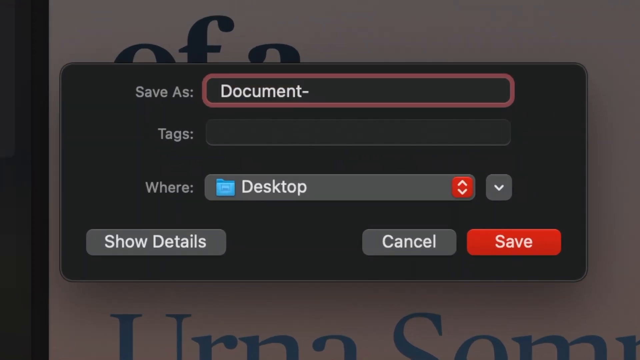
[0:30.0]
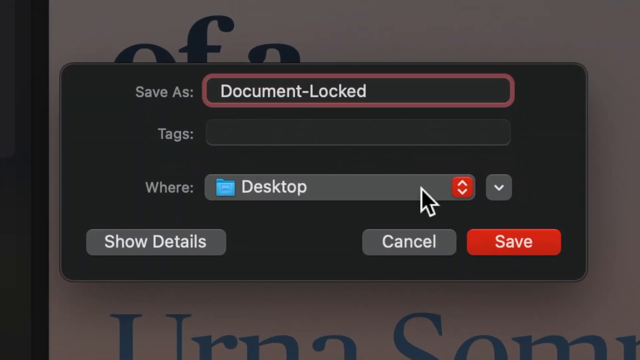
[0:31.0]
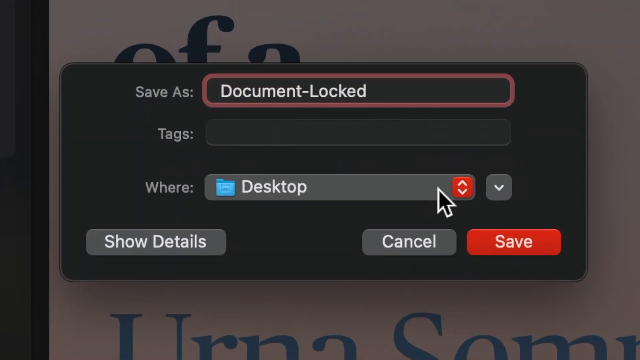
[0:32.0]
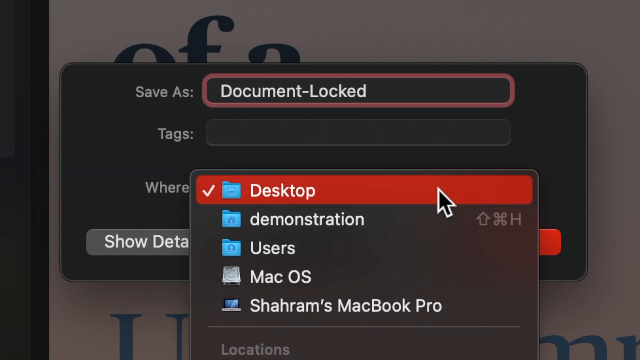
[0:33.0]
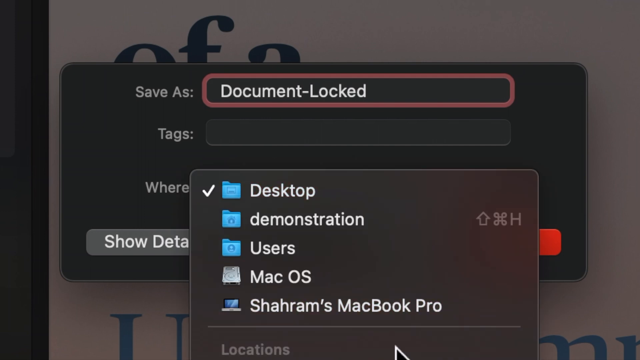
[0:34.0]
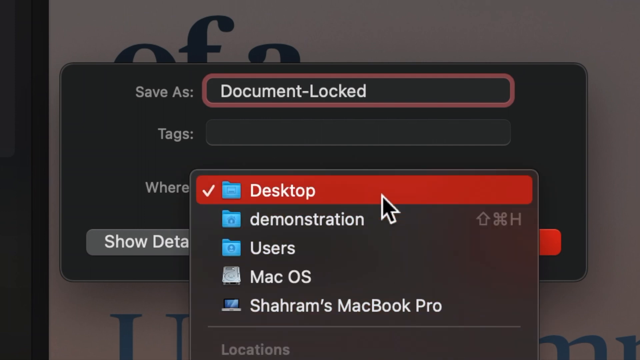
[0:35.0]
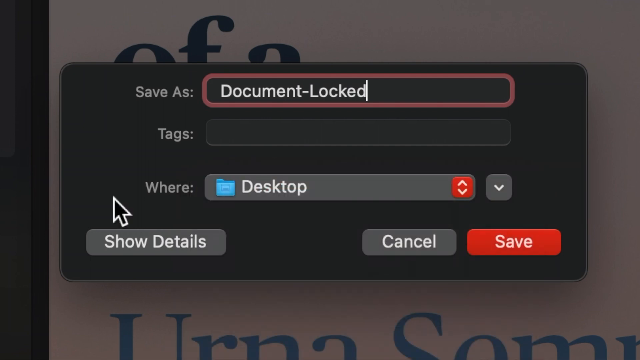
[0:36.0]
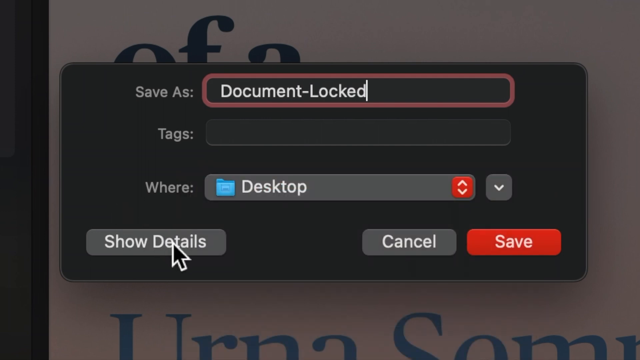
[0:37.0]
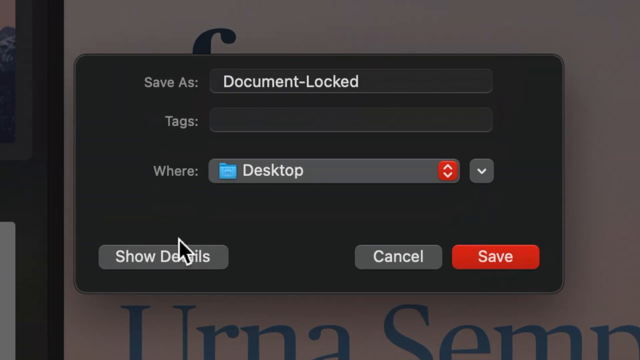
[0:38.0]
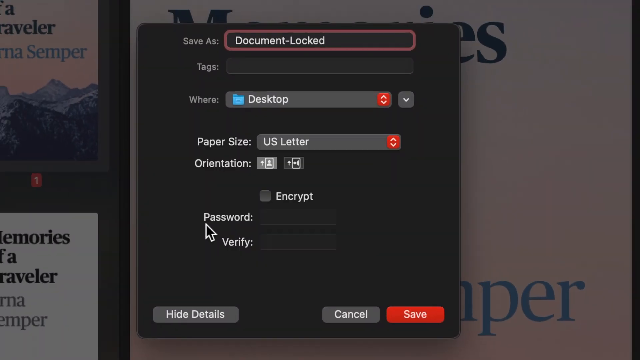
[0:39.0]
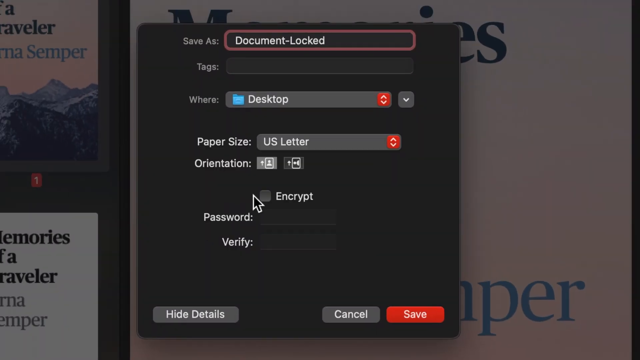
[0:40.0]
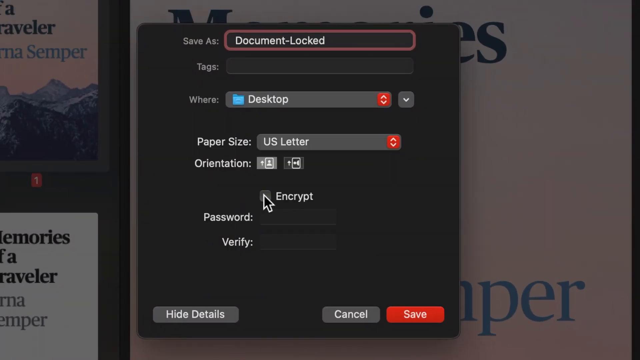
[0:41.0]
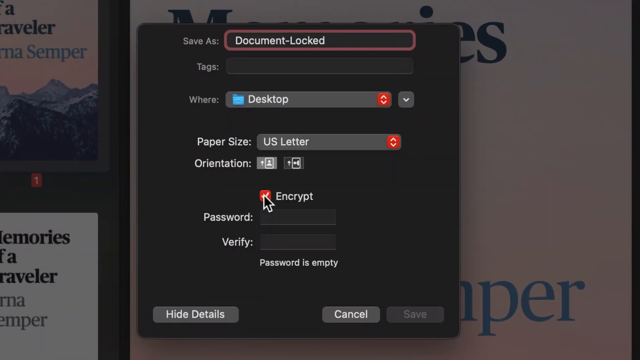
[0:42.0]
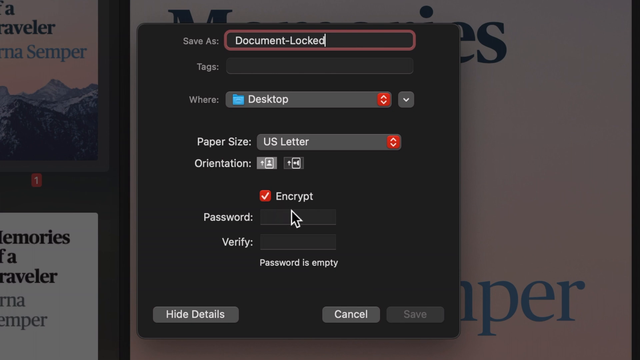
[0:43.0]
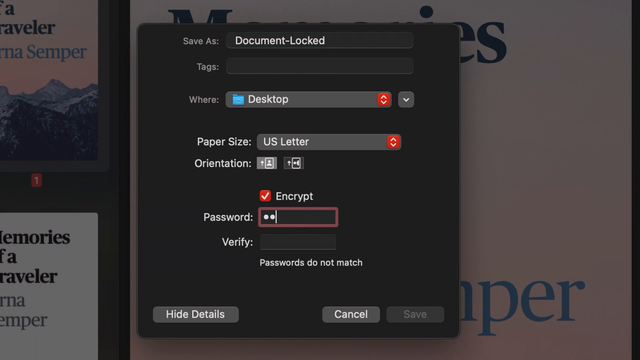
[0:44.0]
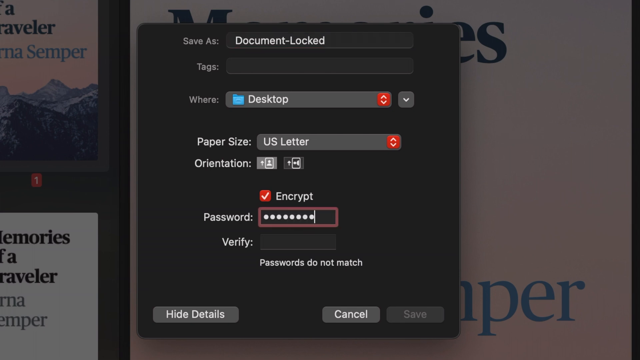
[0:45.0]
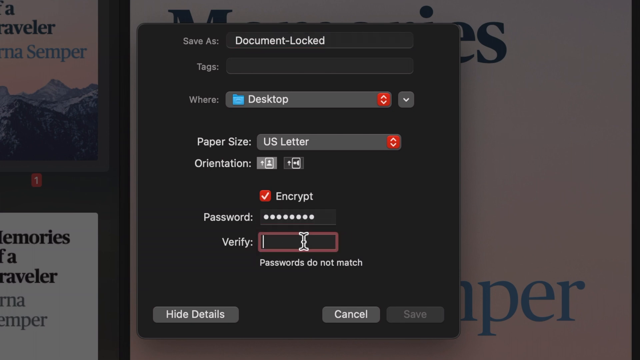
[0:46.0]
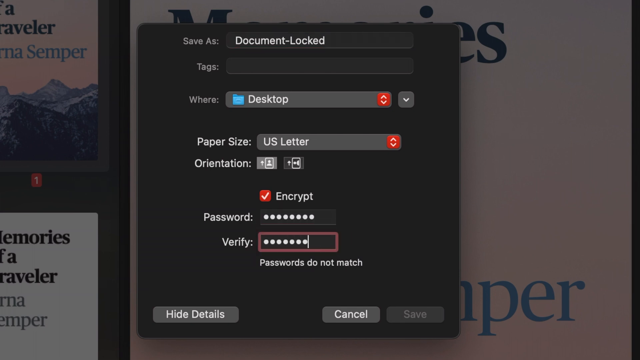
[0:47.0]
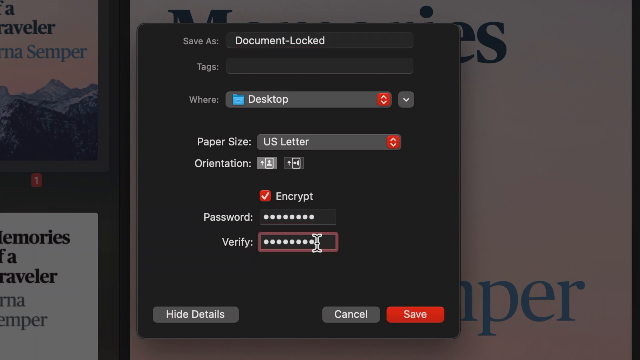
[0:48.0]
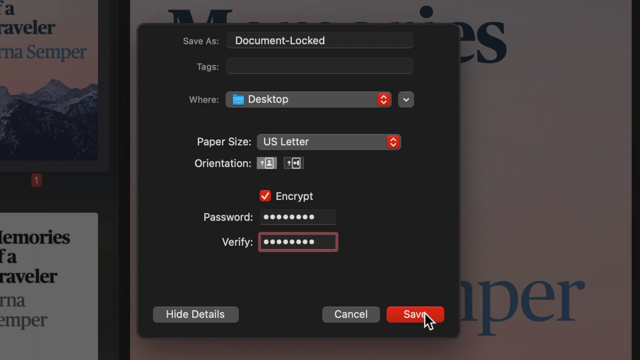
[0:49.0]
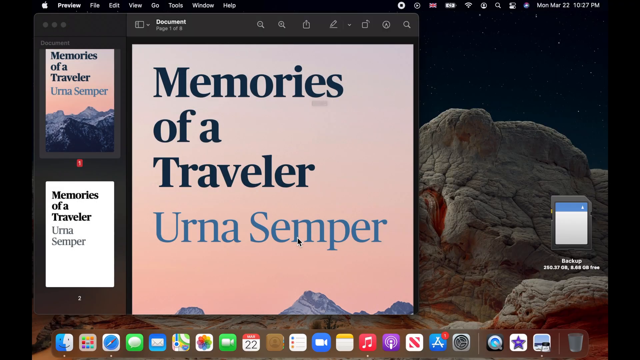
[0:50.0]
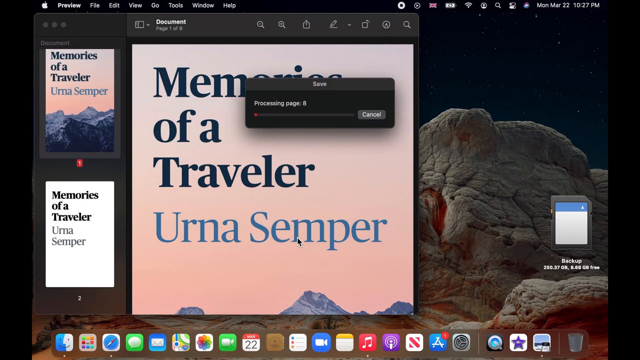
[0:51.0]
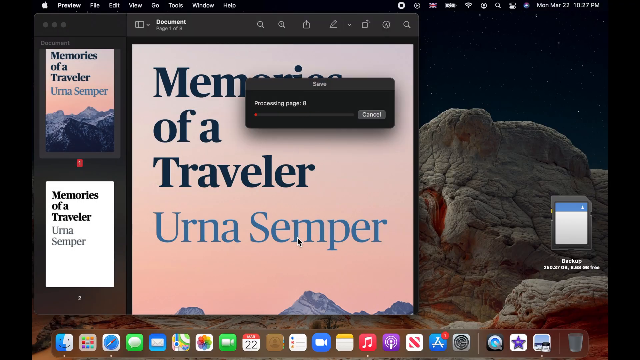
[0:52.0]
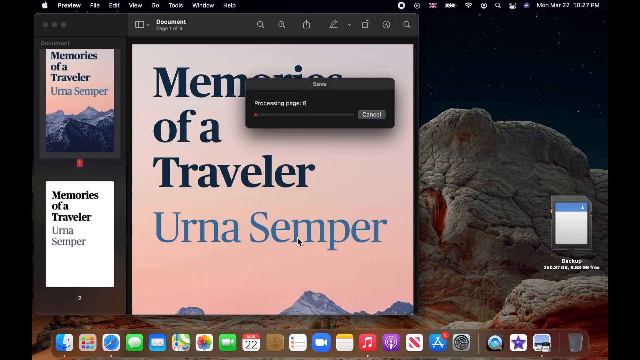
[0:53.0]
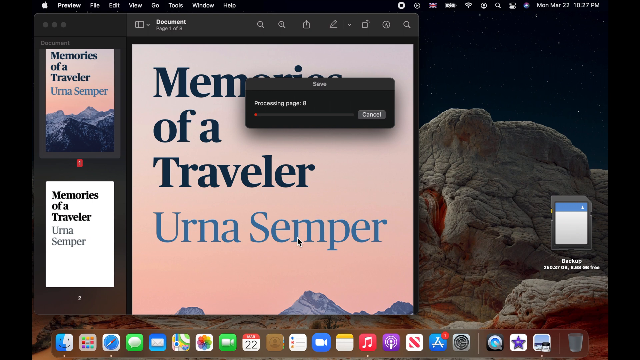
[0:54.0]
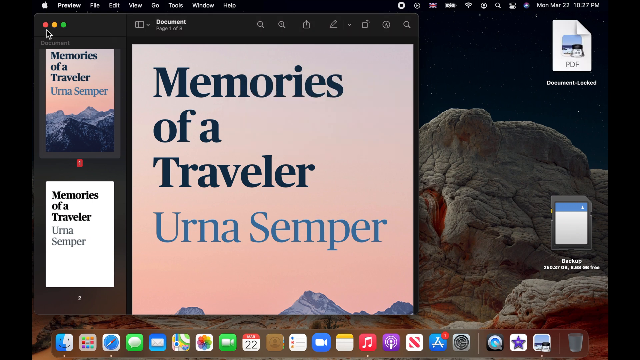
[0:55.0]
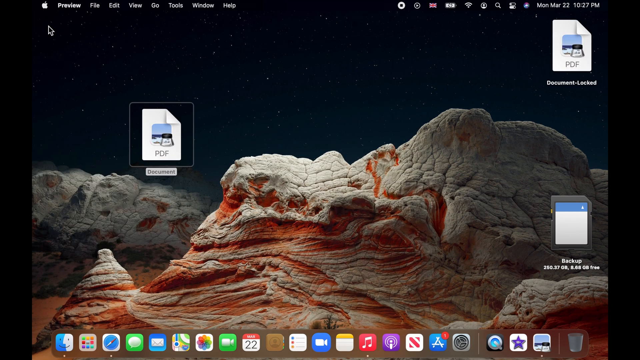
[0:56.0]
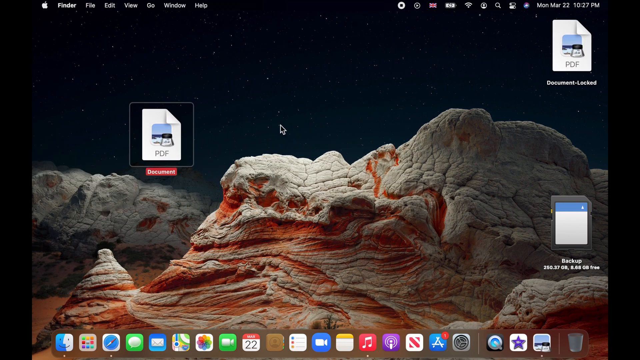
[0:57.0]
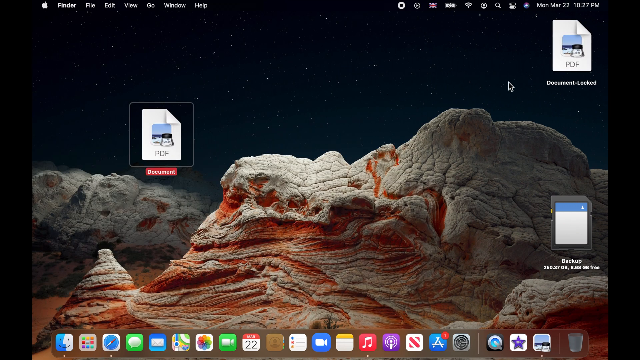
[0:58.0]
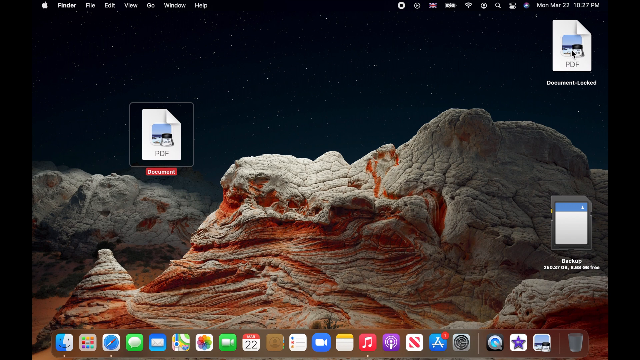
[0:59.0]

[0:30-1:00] A dark-themed menu of a program on a Windows machine is shown. At the top is a "save as" option with a field; underneath is a "tags" field that is empty, and below that is "where", for selecting folders, currently showing "desktop" with an arrow next to it. Below these options are buttons: "show details" on the left of the window, and on the right "cancel" and, next to it, "save" as a red button. Text is typed into the "save as" field: "locked" is there at first, and a dash with the word "locked" is added. The cursor moves to the "where" section, clicks on "desktop", scrolls down and reselects "desktop". It then clicks "show details", which brings up further options in the window: "paper size", with "US letter" selected; an orientation option with icons of a page in portrait style and a page on its side for landscape; and a checkbox reading "encrypt", with two fields, "password" and "verify". The cursor clicks "encrypt", which adds the text "password is empty" beneath the verify field. The cursor clicks the password field and types various keys, then clicks the verify field and types more characters, and then clicks the save button. Another popup appears showing the saving process, and the page numbers increase. That window disappears, and the program showing the PDF is closed. The cursor moves to the middle of the screen, where a new icon with a PDF icon has appeared on the desktop, named after the newly created document: "document-locked".